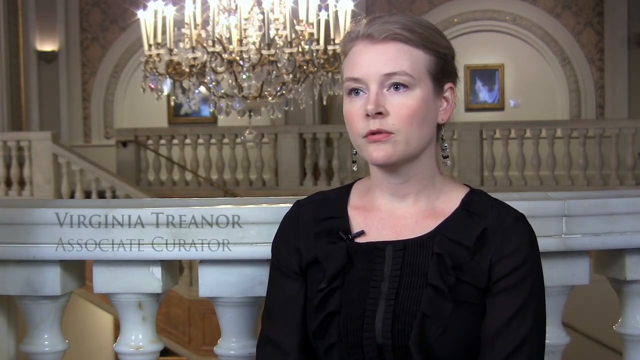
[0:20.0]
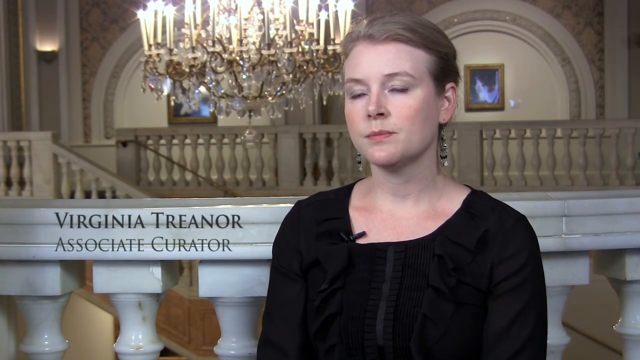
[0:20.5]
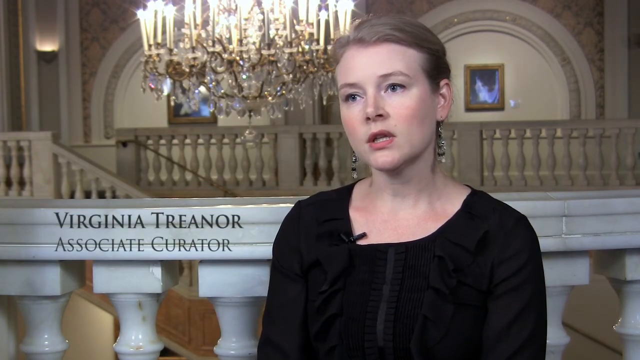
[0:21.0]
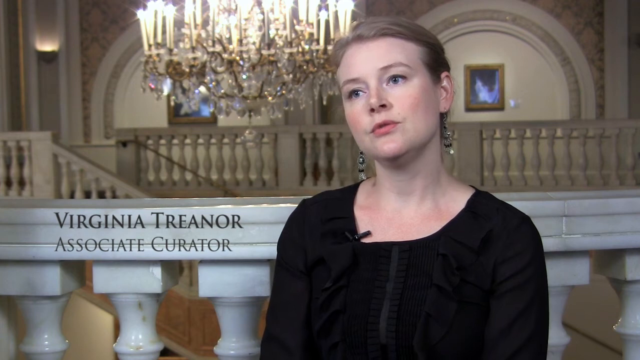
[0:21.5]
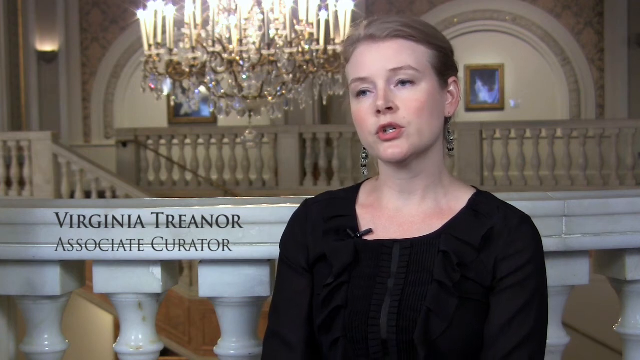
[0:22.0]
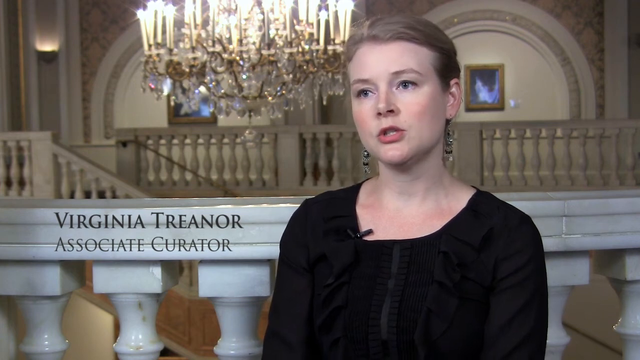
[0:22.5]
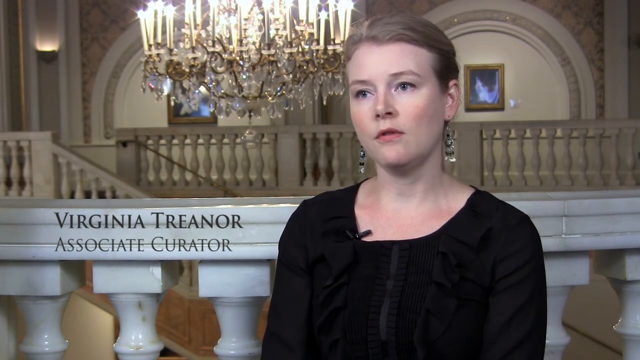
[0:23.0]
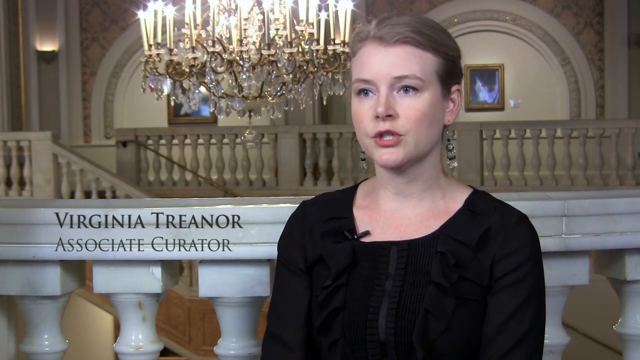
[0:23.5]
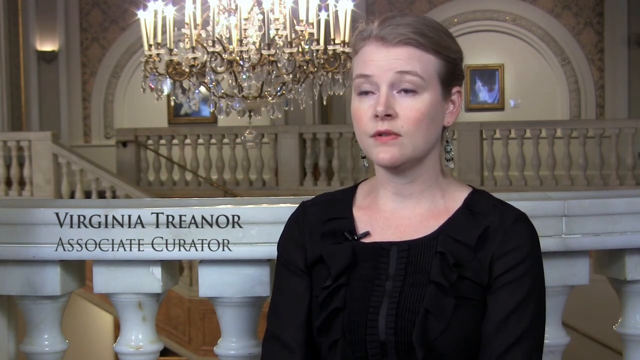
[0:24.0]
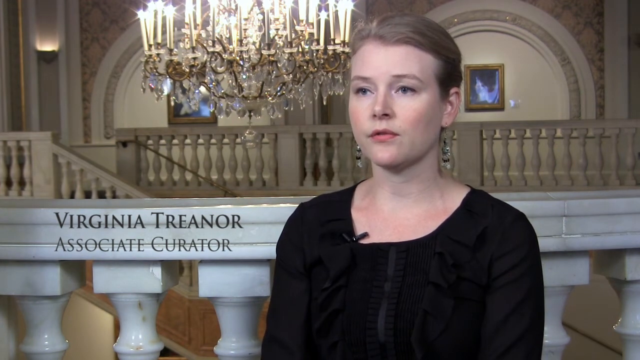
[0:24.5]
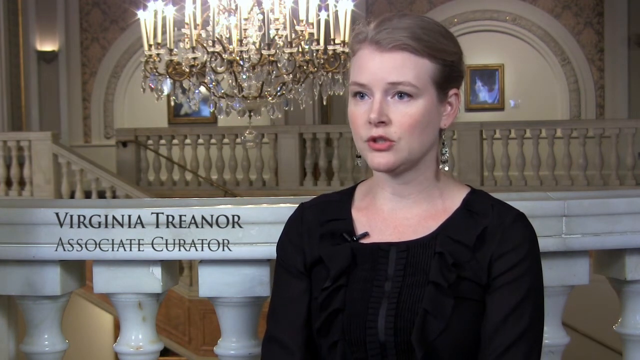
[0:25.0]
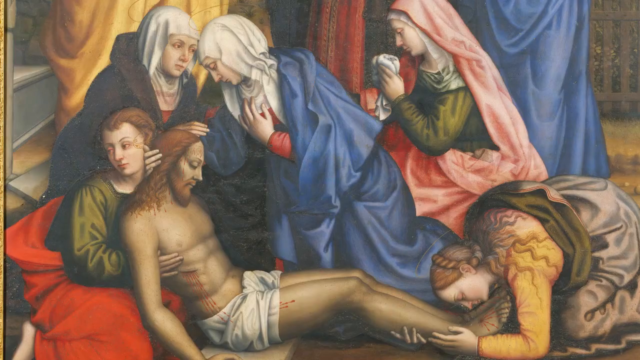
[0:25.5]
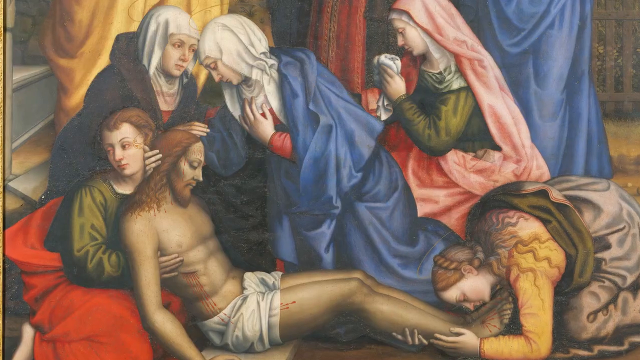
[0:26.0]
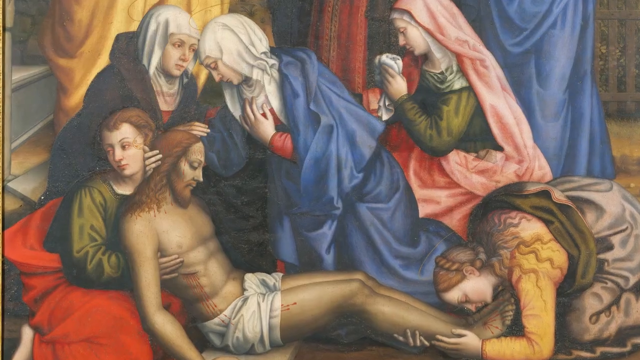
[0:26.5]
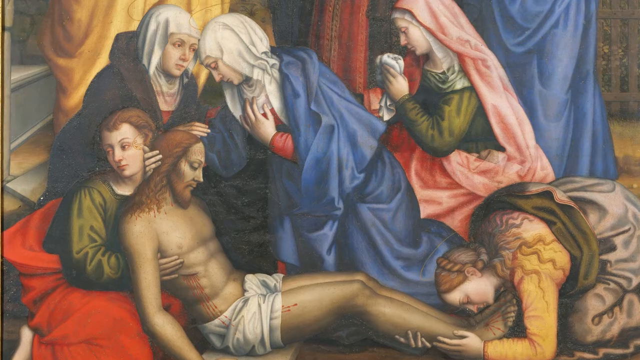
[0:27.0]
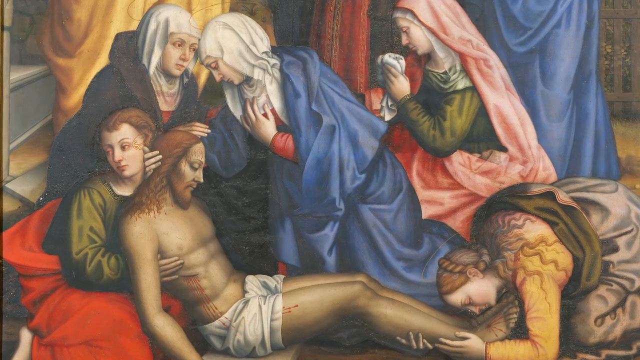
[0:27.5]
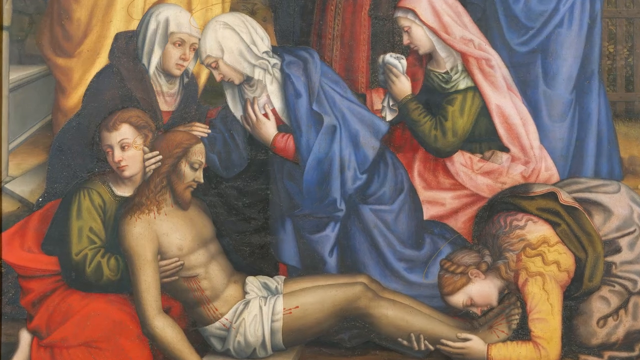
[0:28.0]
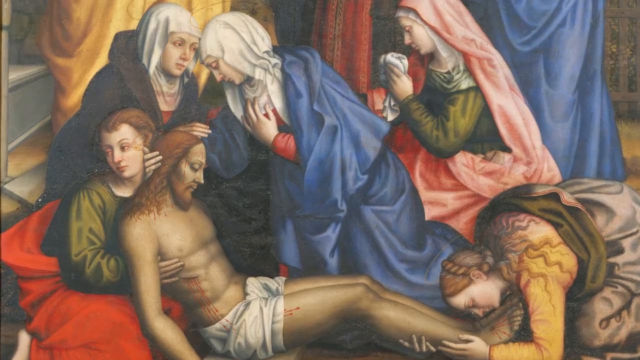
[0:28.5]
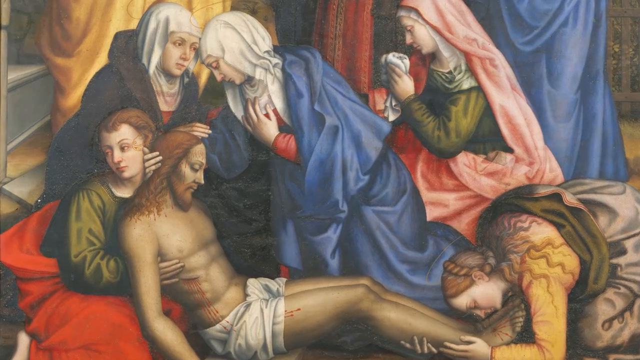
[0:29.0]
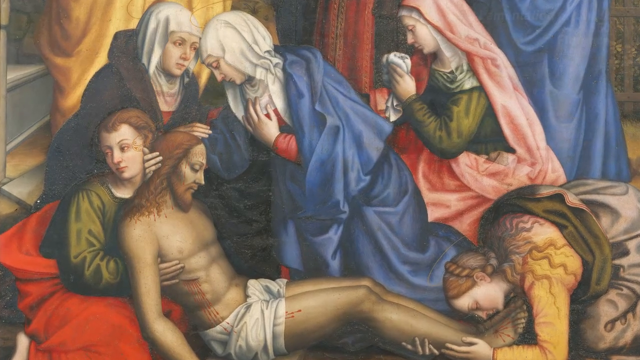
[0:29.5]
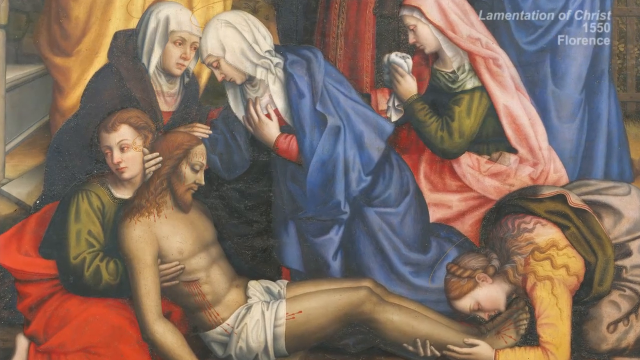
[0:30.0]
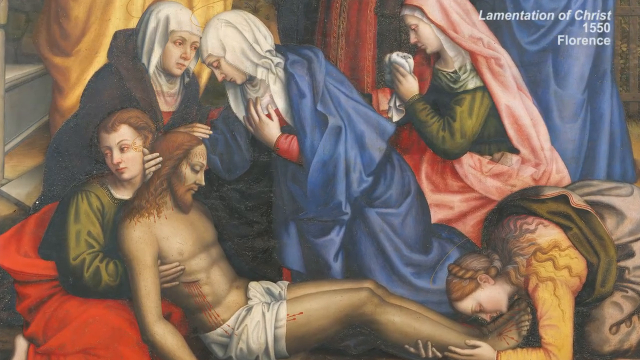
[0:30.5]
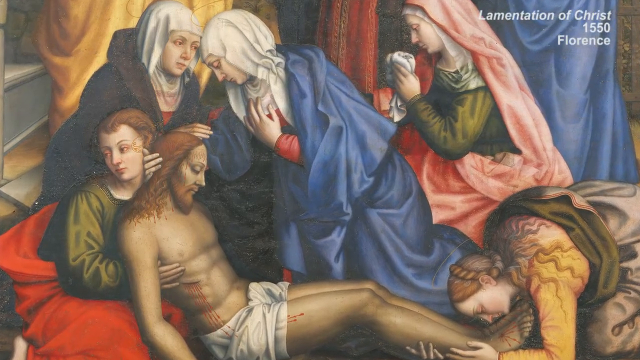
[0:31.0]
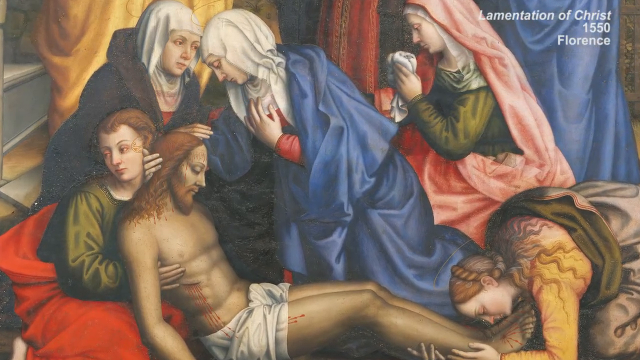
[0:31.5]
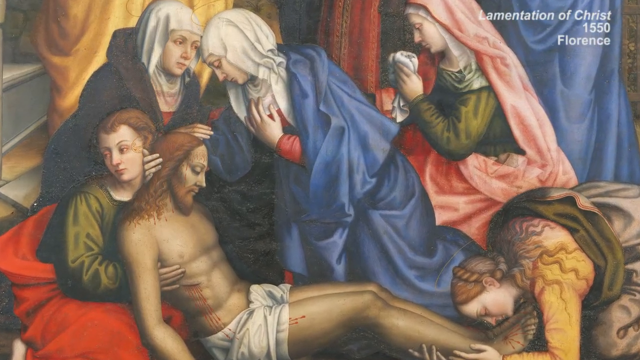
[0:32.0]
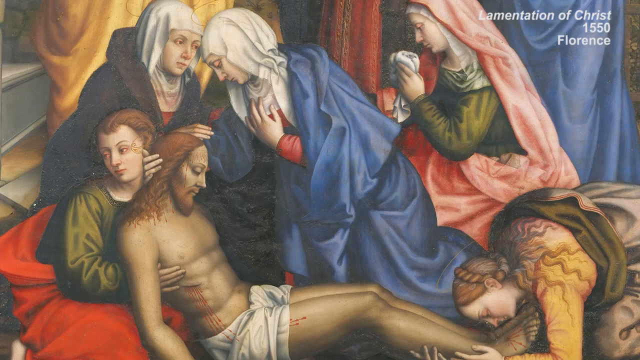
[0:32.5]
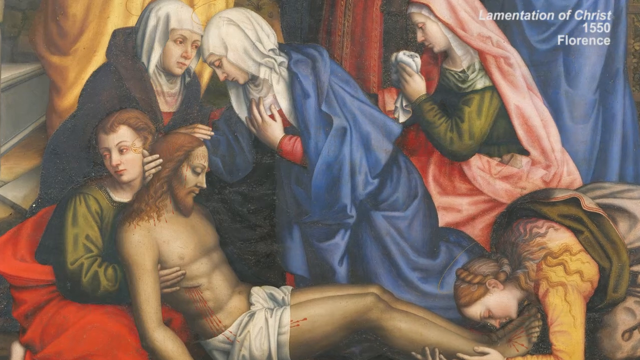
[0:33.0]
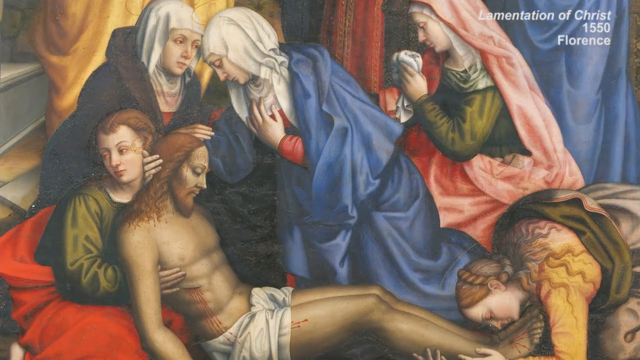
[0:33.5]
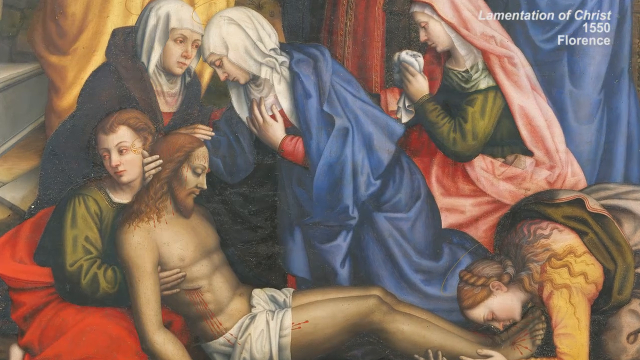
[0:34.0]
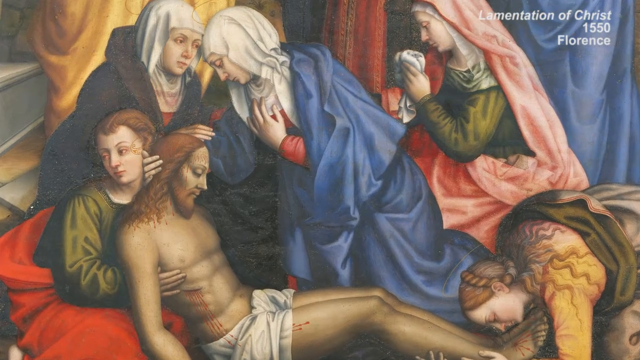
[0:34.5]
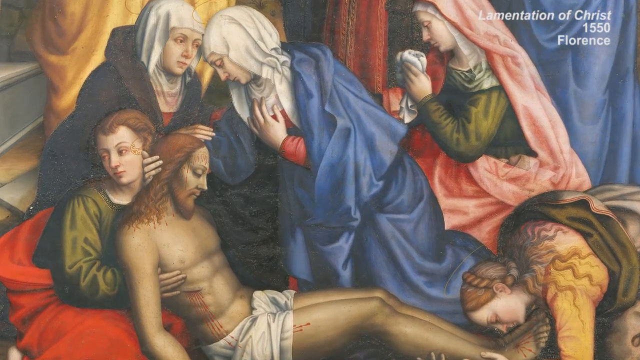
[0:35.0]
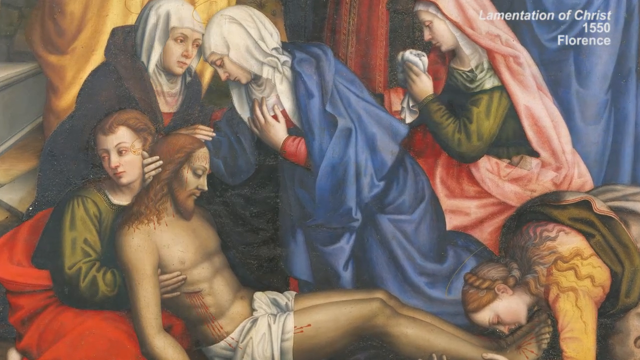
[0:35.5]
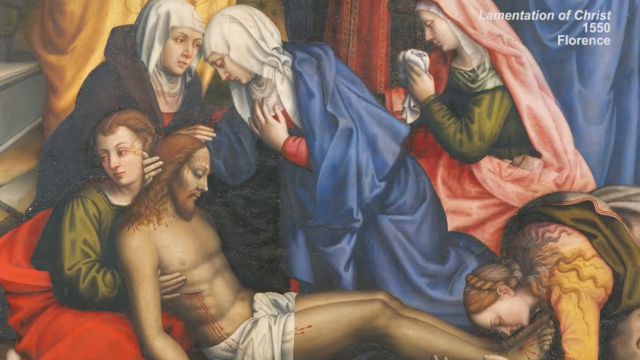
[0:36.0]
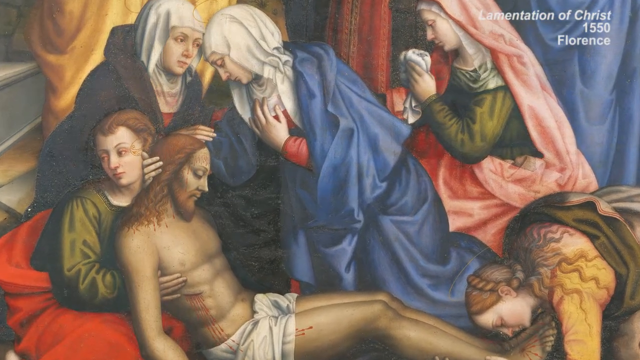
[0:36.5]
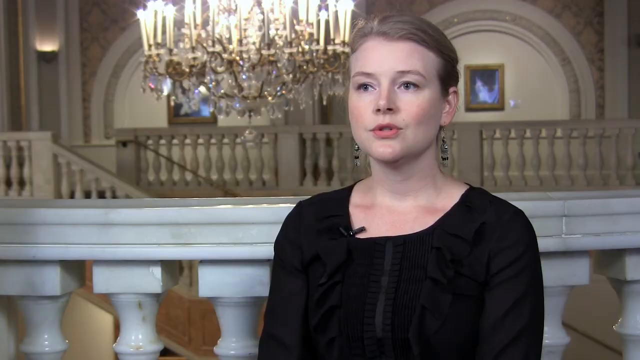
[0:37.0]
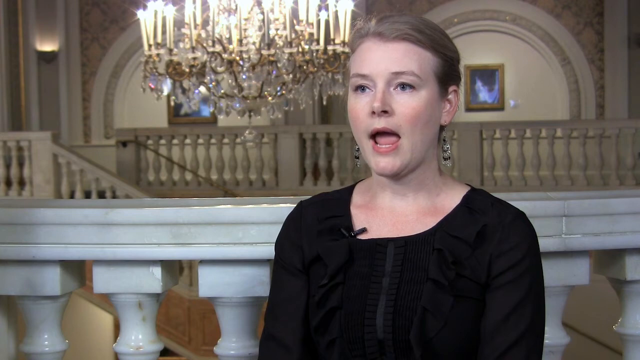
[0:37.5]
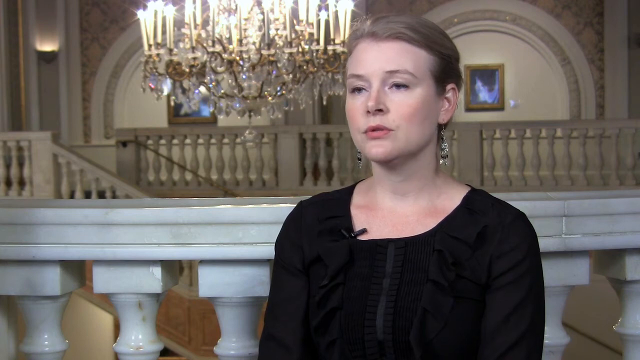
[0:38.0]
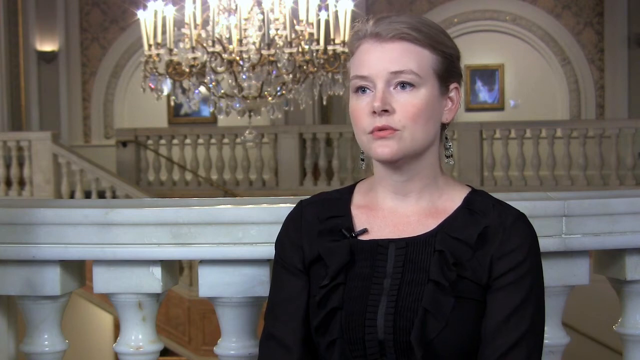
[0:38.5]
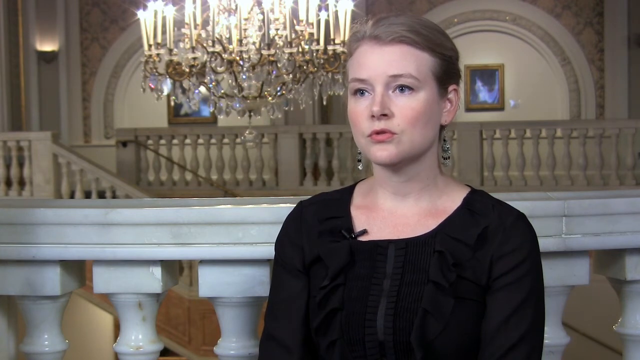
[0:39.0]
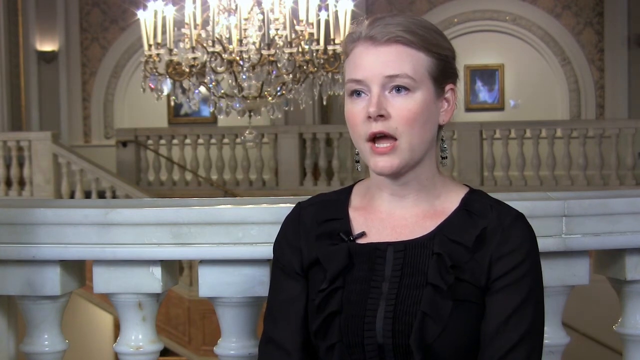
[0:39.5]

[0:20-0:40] The woman continues speaking to a person on the left side of the screen, apparently off-camera. Text appears to her left reading "Virginia Trainor, Associate Curator." She nods, and the video cuts to a painting of what looks like a religious scene from Jesus' life in which figures are holding him, possibly before he was nailed to the cross. On the right, one woman kneels down kissing his feet, another woman holds him from behind on the floor, and another woman leans down with her right arm around the back of his head. The camera zooms in to the left side, and text appears in the upper right corner reading "Lamentation of Christ, 1550 Florence." The video then cuts back to the woman, who looks toward the left side, speaking confidently and nodding a few times.